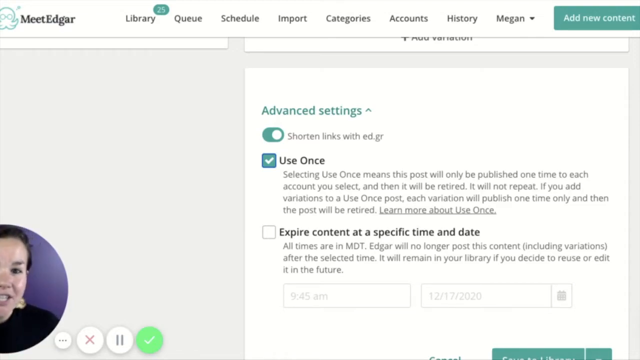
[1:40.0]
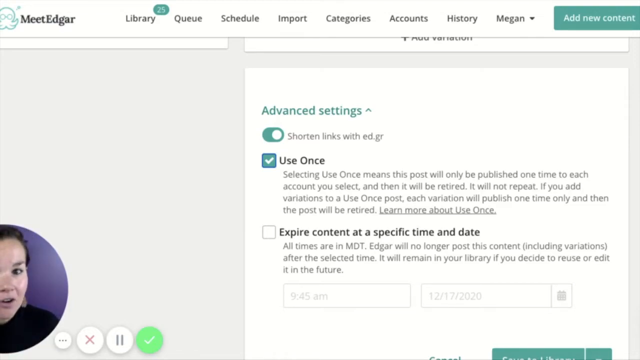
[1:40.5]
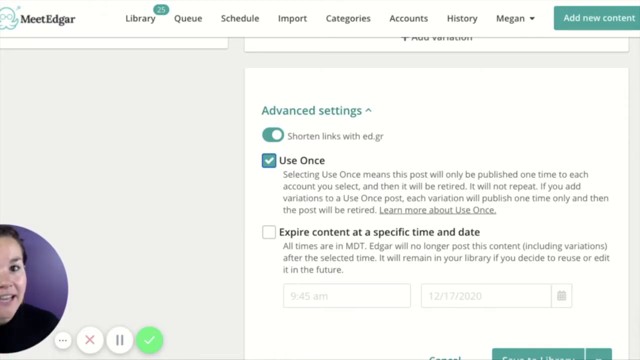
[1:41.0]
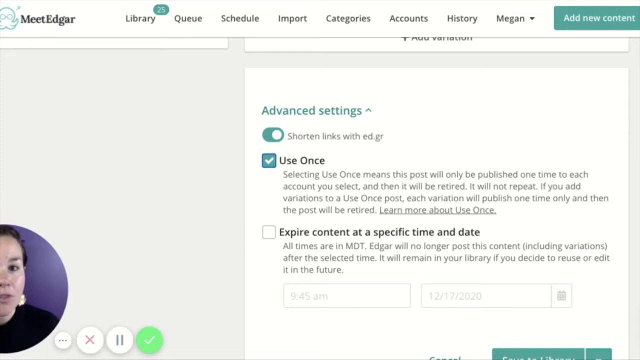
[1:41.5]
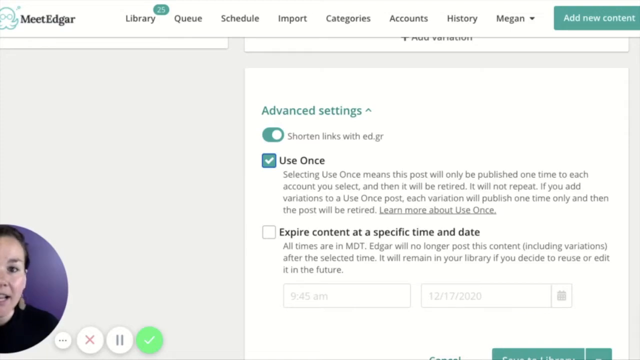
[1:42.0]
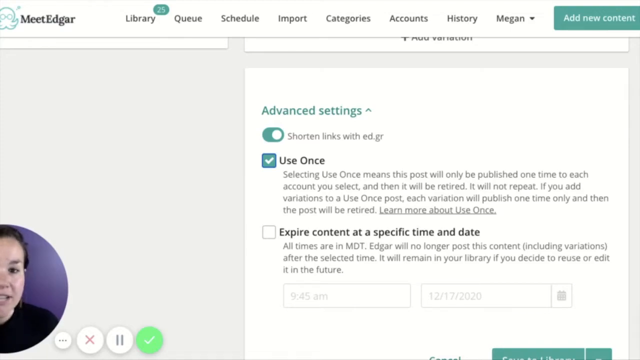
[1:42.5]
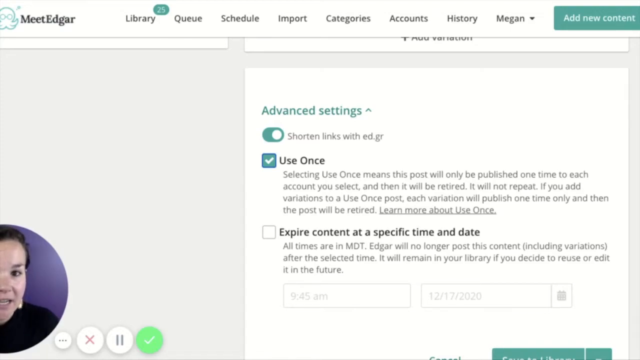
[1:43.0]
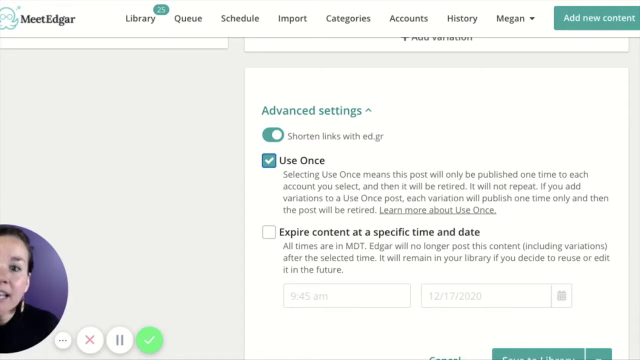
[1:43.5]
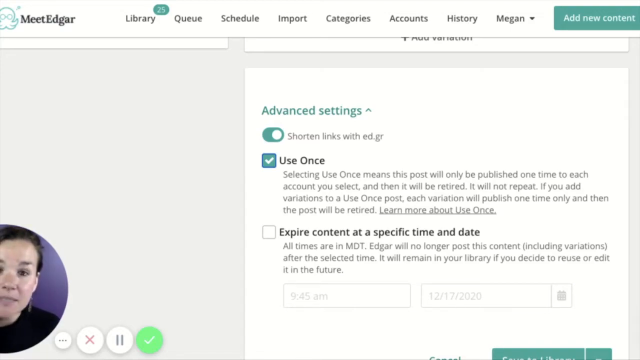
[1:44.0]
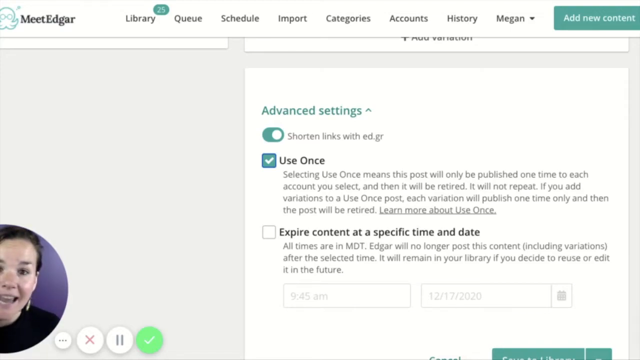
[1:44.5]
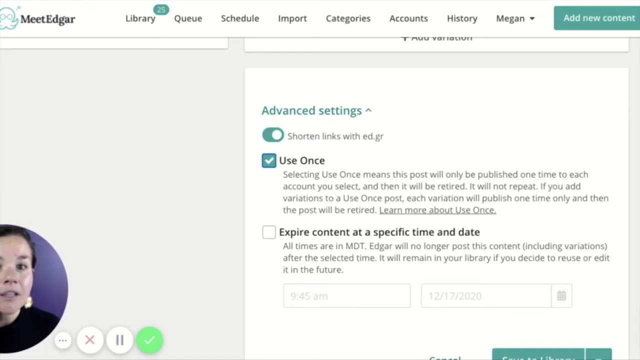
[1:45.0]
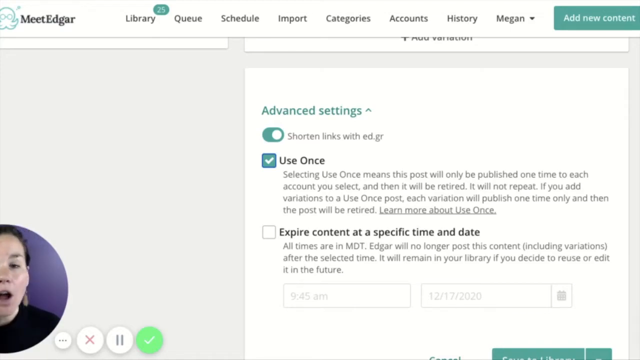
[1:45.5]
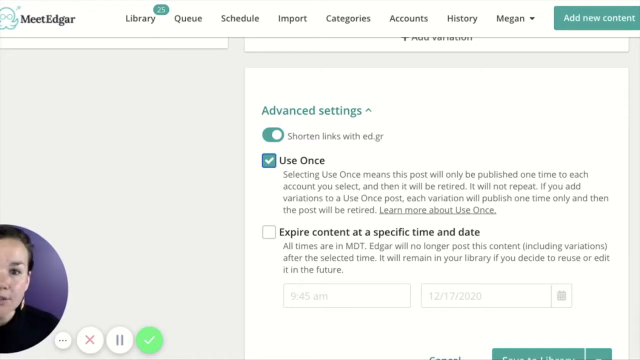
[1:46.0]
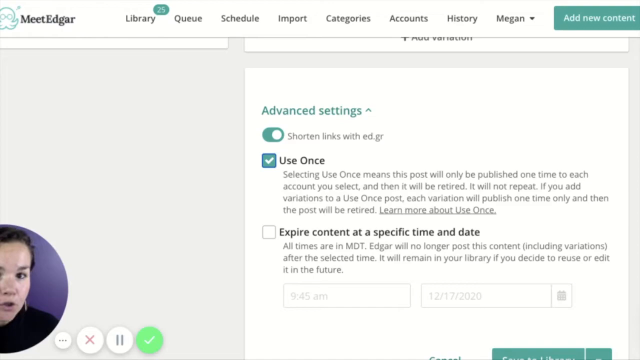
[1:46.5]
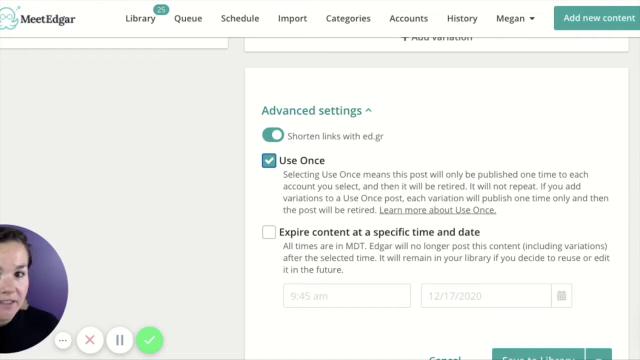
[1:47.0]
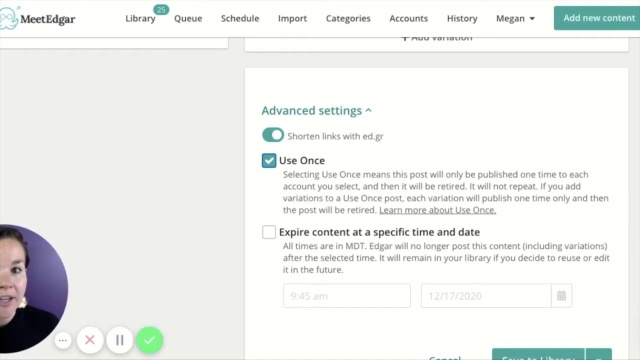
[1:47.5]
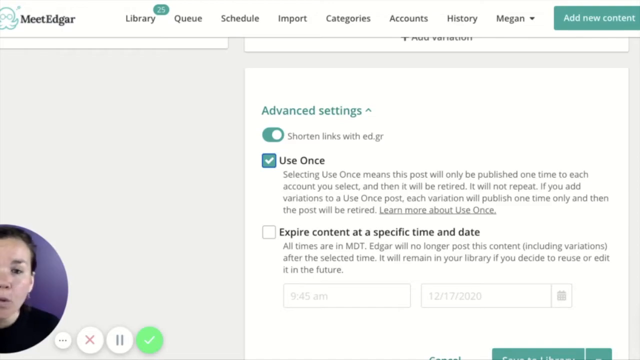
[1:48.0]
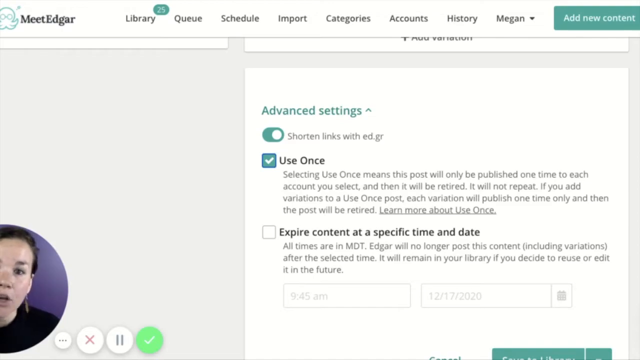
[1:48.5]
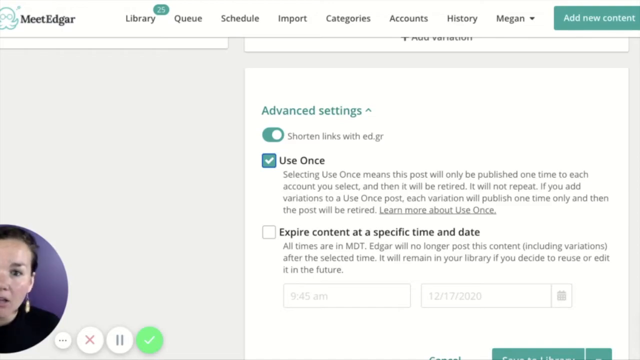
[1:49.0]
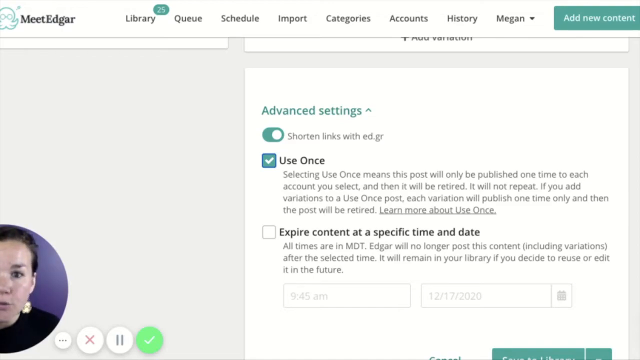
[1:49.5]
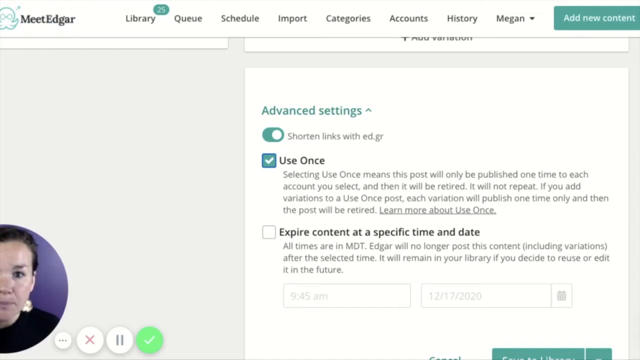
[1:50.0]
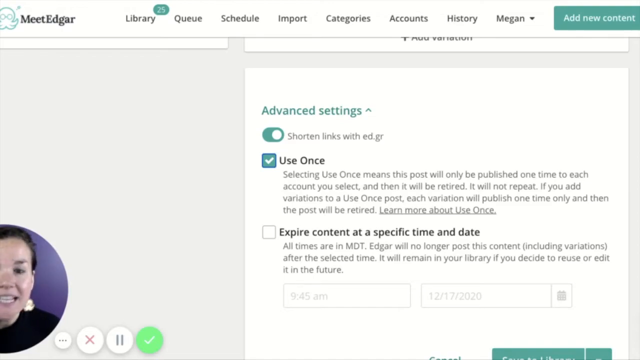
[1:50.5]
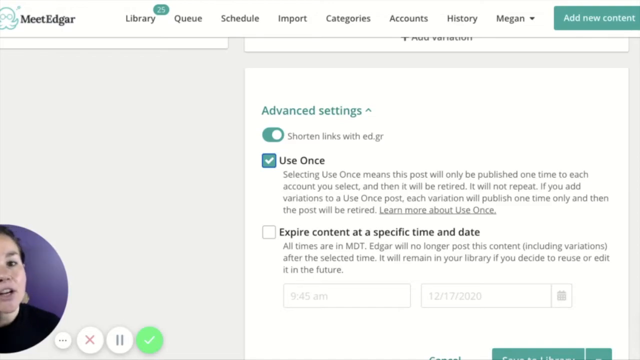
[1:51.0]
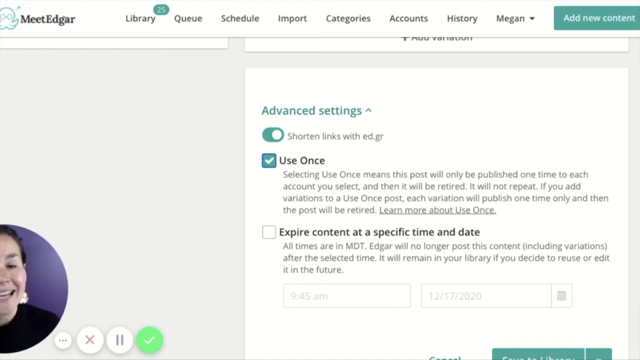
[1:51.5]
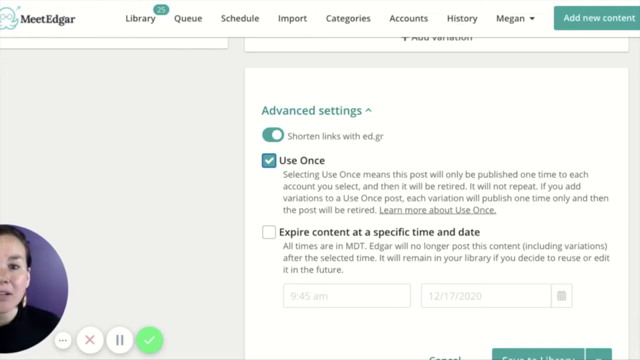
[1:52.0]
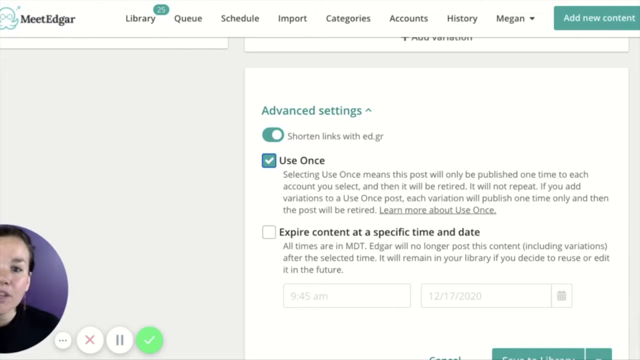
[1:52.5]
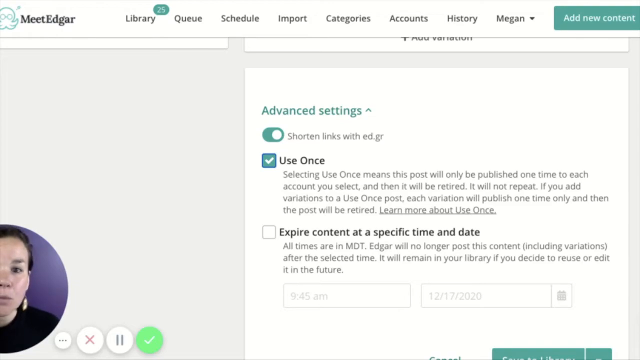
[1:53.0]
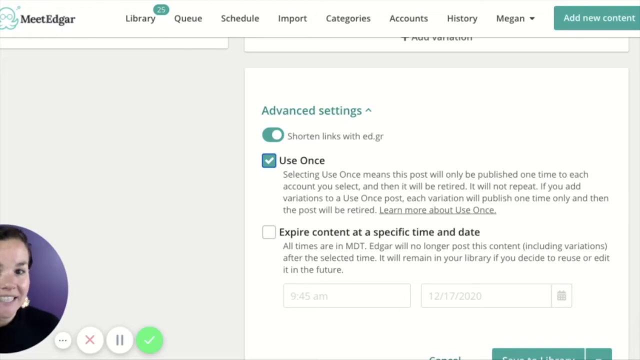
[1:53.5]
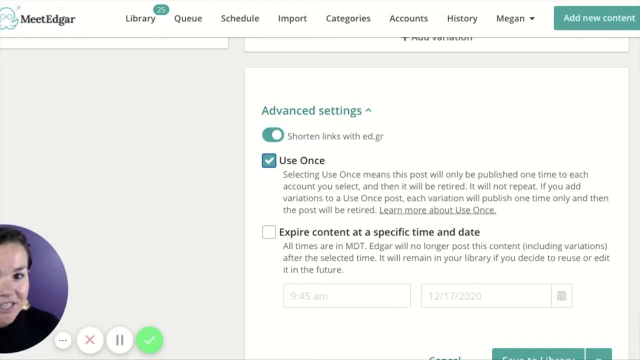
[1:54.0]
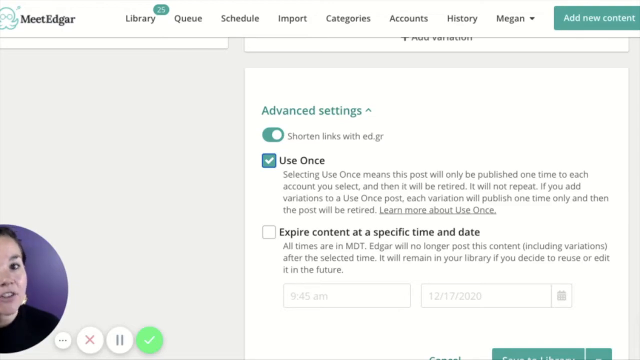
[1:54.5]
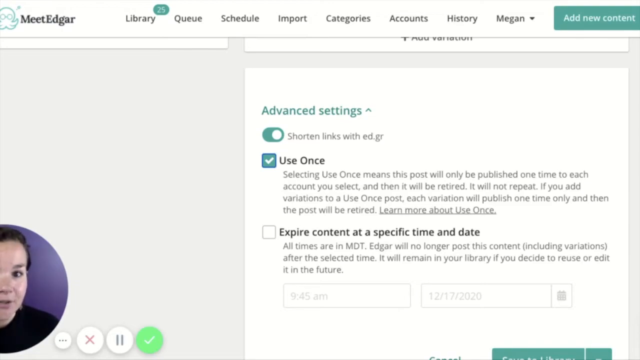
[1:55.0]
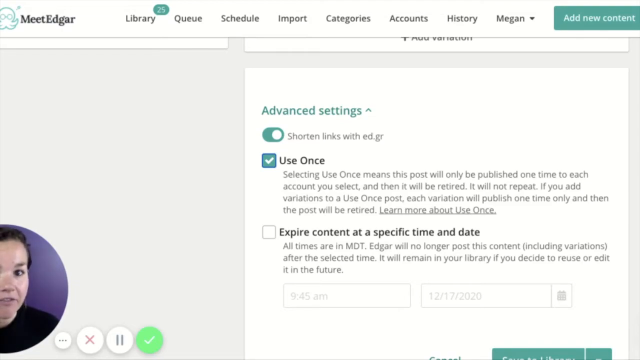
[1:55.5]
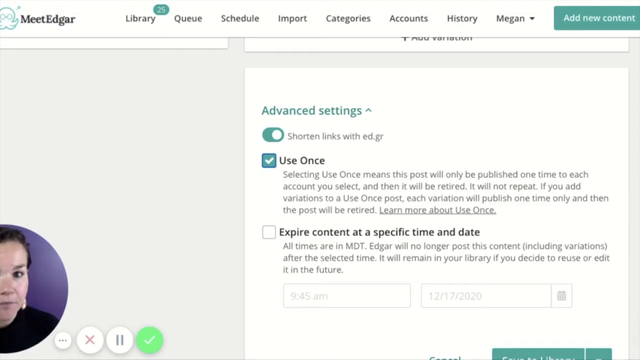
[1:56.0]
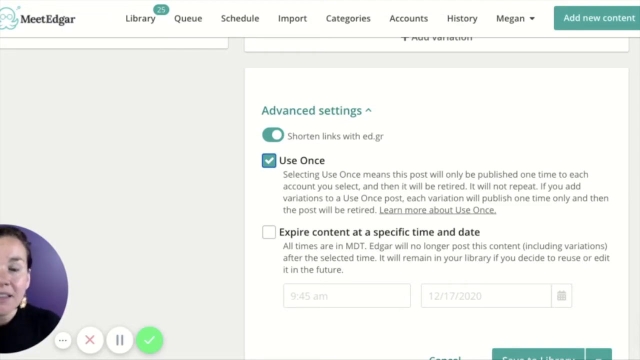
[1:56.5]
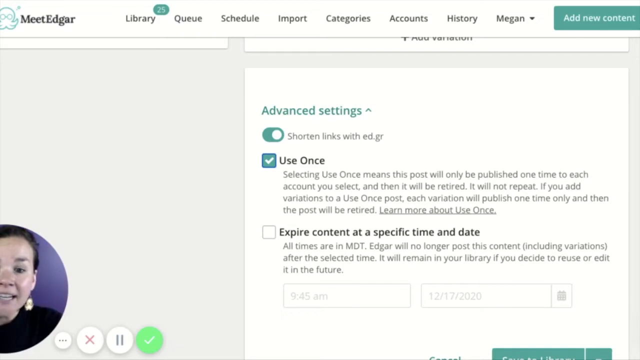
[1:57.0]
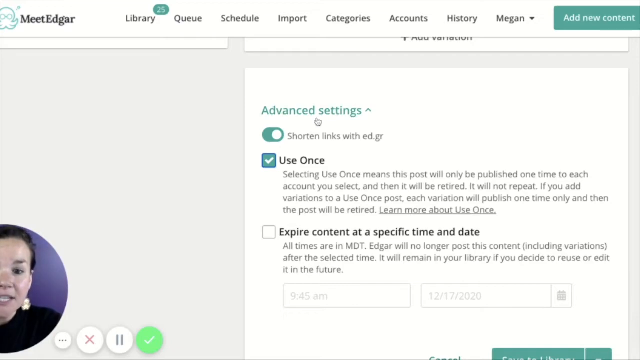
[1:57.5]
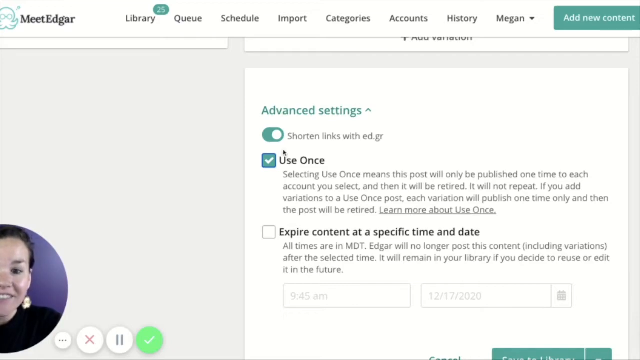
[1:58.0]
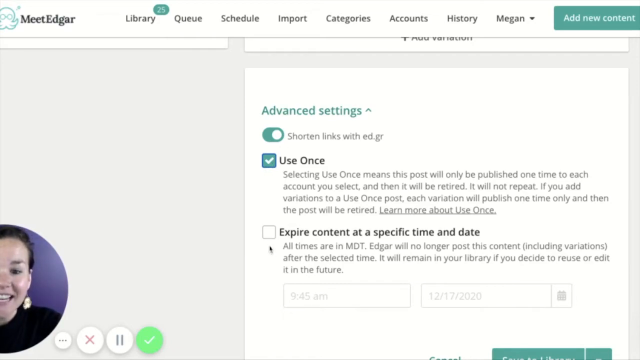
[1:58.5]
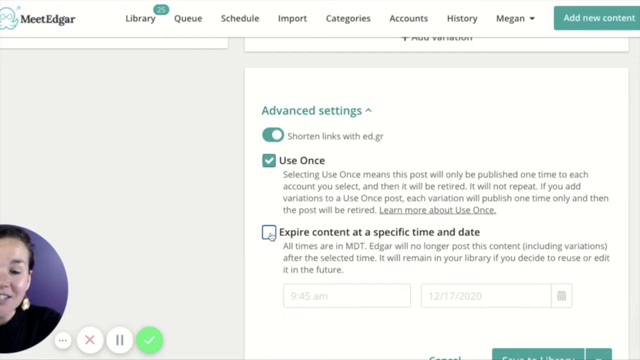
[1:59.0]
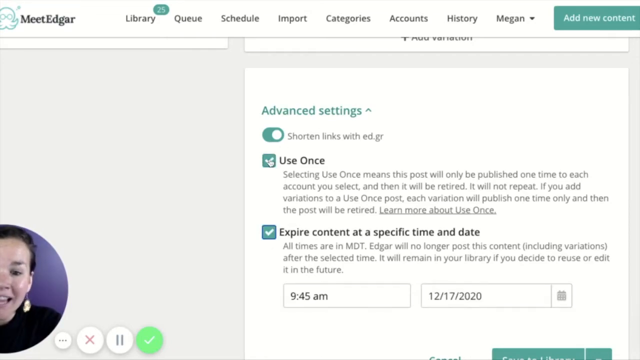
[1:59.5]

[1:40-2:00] The dark-haired woman, who might be Megan, continues with the Advanced Settings section. Below it is an already enabled switch reading "shorten links with ed.gr," and below that the "Use Once" checkbox, already ticked, followed by an unticked checkbox, "Expire Content at a Specific Time and Date." She clicks the second checkbox, and a field showing the time and date appears. This appears to be a lower part of the page.